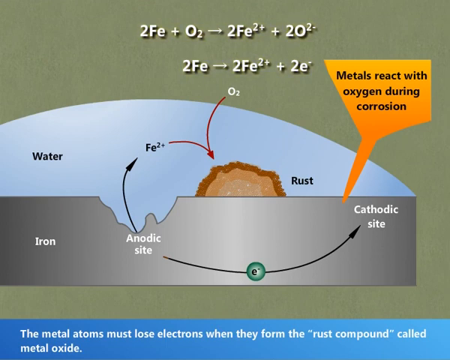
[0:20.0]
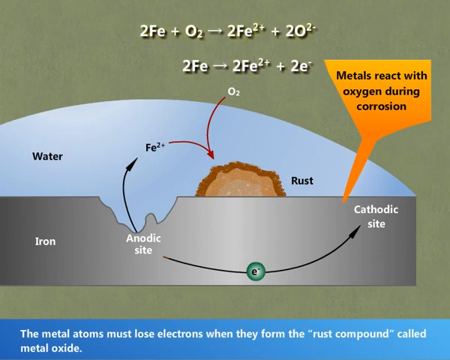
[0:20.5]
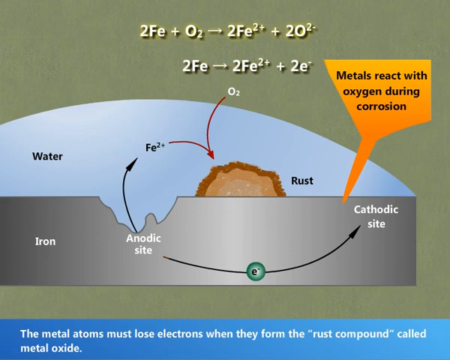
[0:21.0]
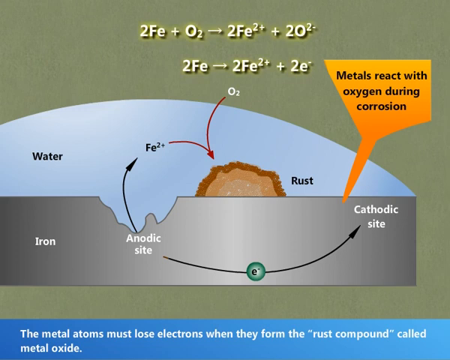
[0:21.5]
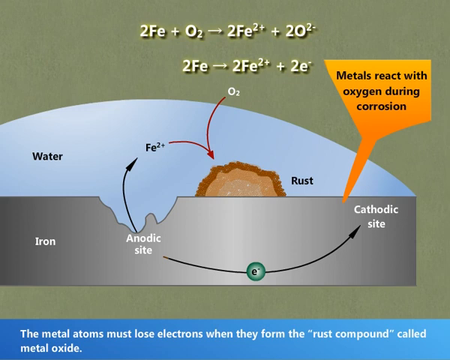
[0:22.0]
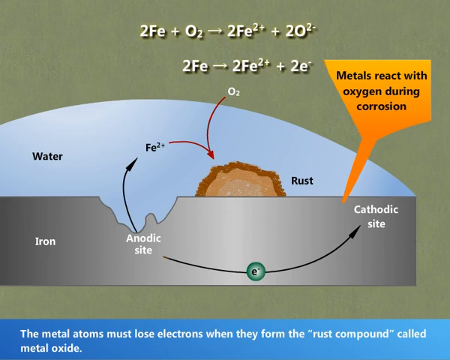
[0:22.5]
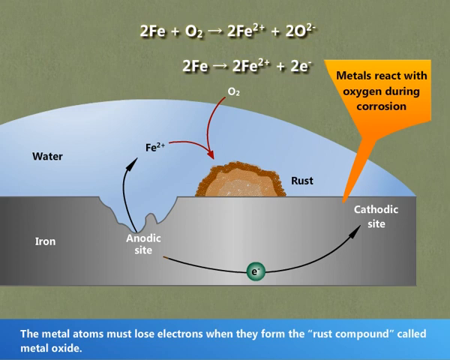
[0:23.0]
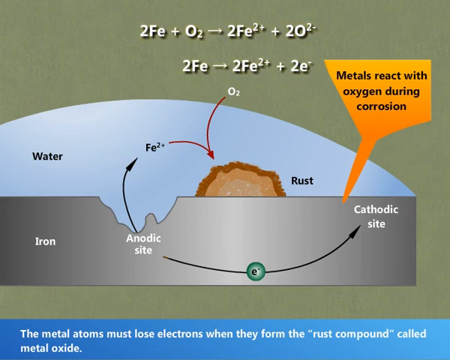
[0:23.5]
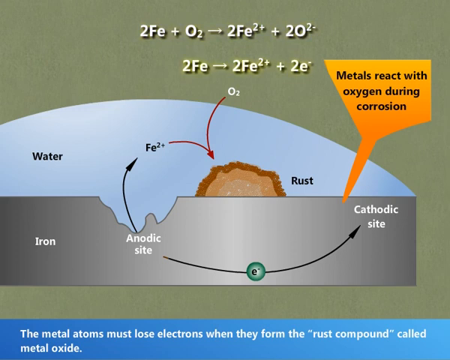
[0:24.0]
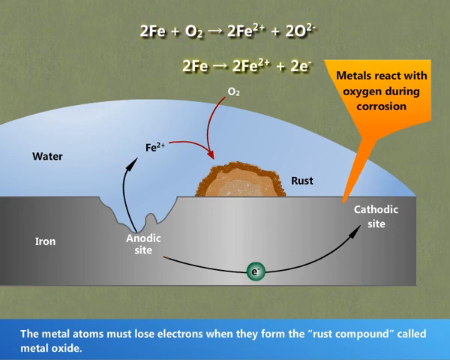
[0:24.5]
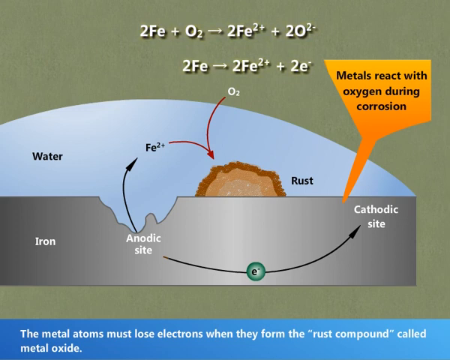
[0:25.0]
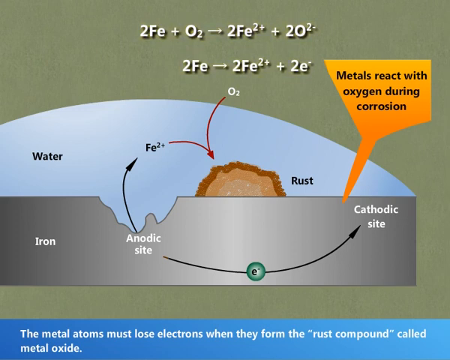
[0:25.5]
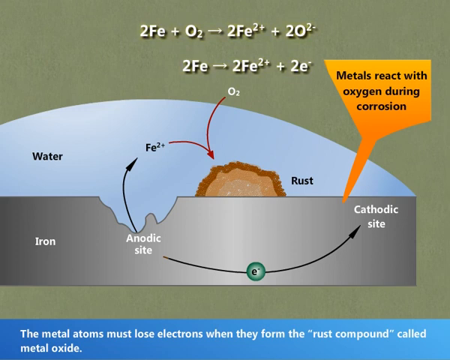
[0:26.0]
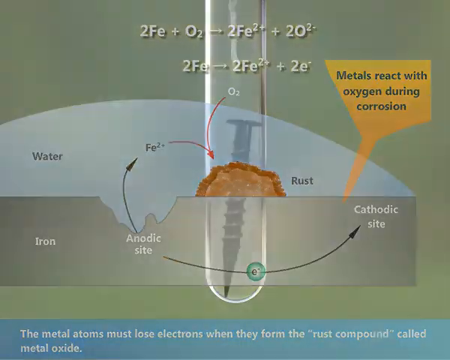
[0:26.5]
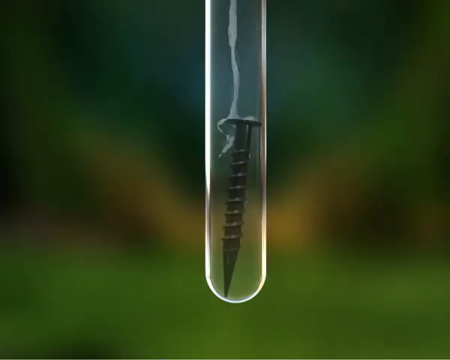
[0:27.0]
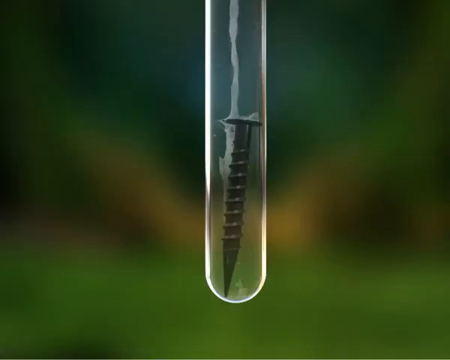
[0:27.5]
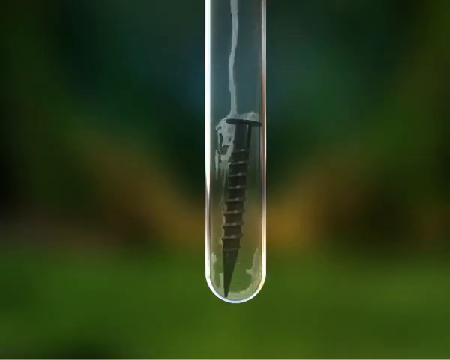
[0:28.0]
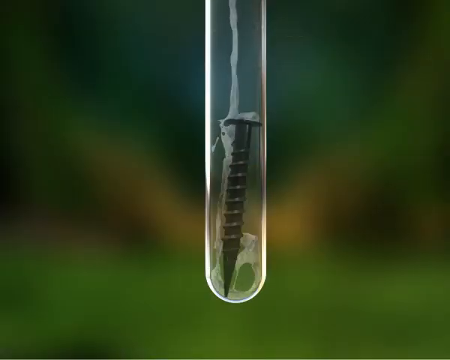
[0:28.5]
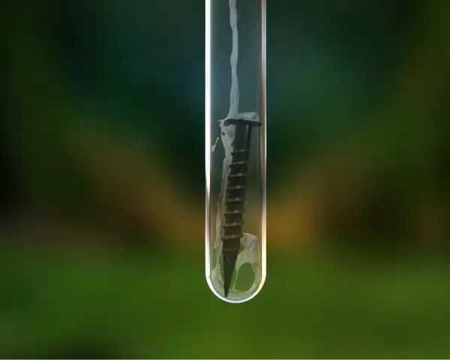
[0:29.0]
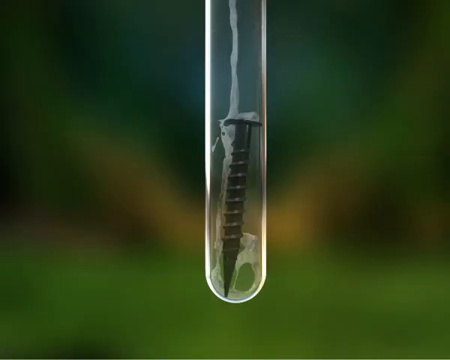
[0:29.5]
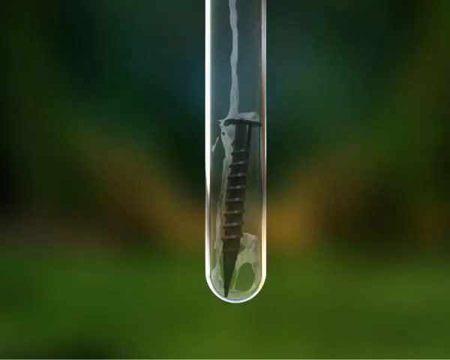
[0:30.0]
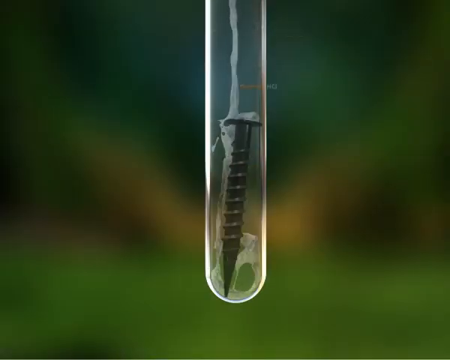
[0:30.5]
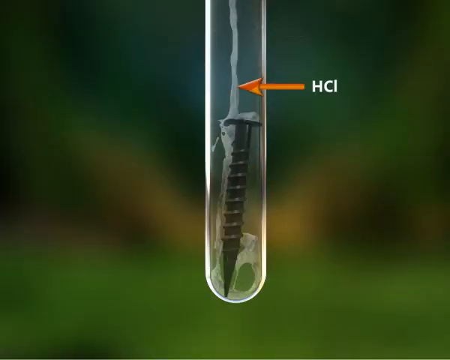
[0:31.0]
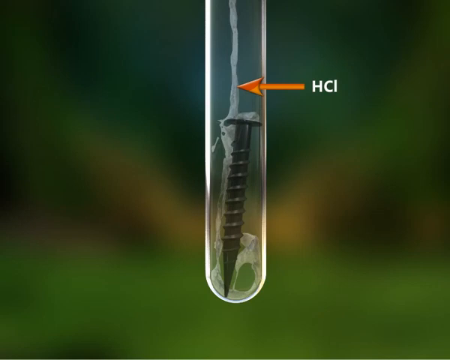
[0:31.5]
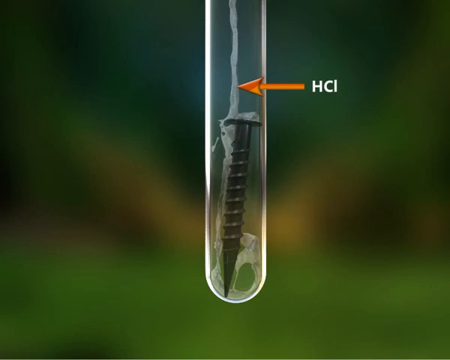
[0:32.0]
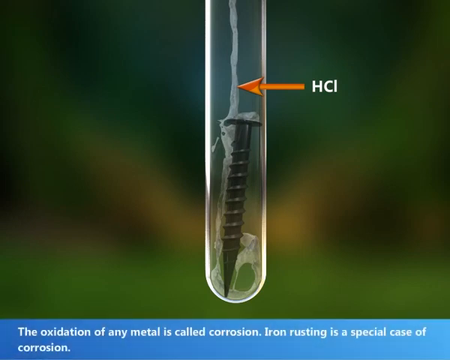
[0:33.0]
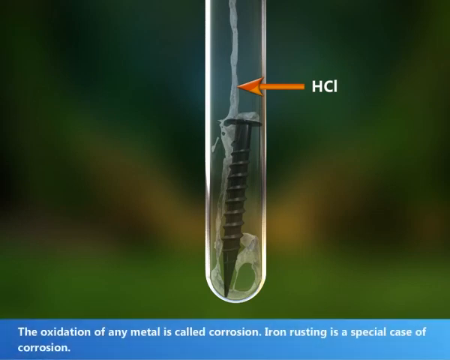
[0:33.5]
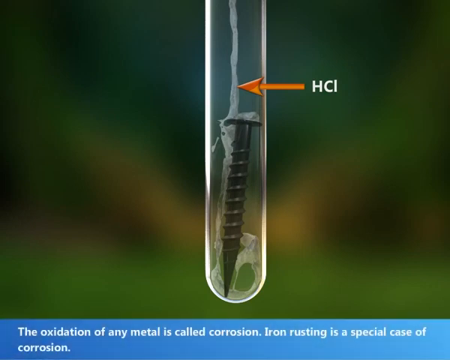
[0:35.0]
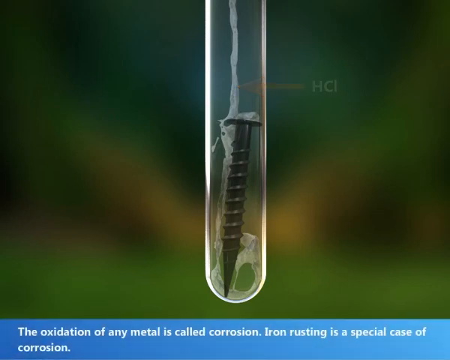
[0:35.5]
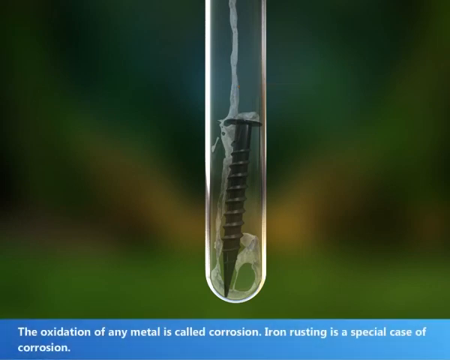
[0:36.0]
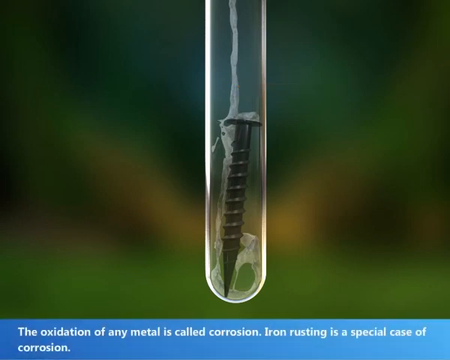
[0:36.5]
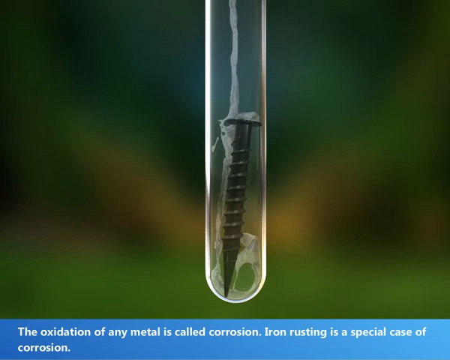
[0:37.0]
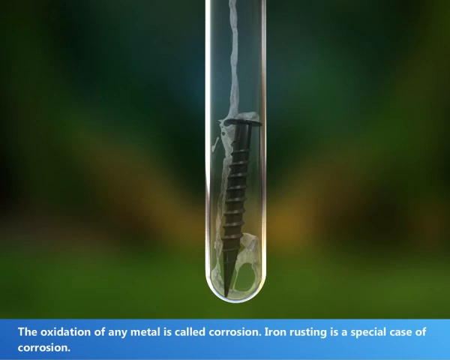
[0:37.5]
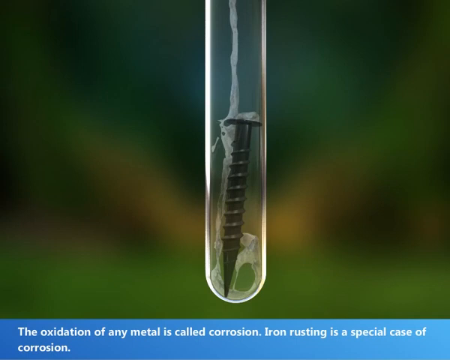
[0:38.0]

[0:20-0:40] White text at the bottom of the screen says "the metal atoms must lose electrons when they form the rust compound called metal oxide." Above the white text is an illustrated silver bar labeled "iron," and within the bar are the words "anodic site" and "cathodic site." Above the iron bar is what appears to be an illustration of water, labeled "water" in black text. A brown blob labeled "rust" is sitting on top of the silver iron bar. In an orange bracket to the right, above the iron bar and water, text says "metals react with oxygen during corrosion." At the top, in green and white text, is a combination of elemental symbols and figures with arrows and plus signs. A dark green background is behind all of this.